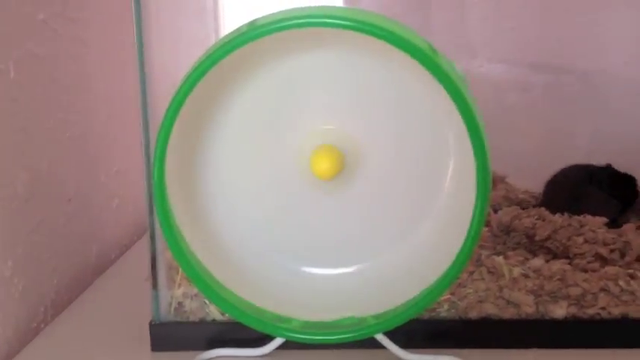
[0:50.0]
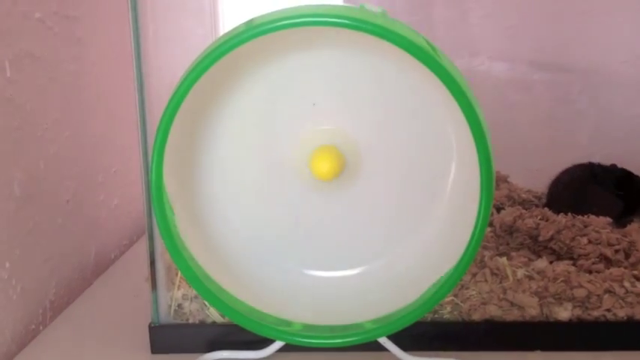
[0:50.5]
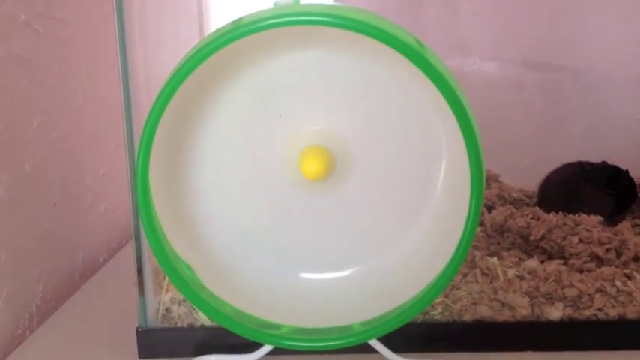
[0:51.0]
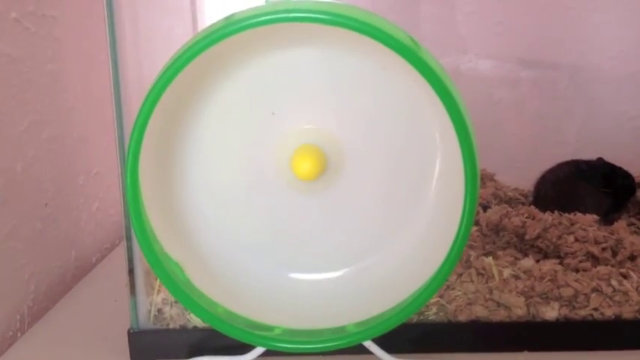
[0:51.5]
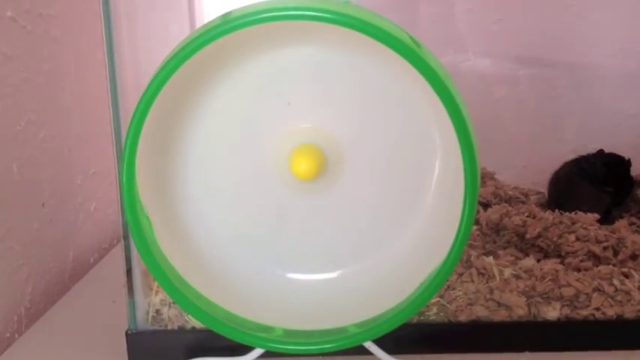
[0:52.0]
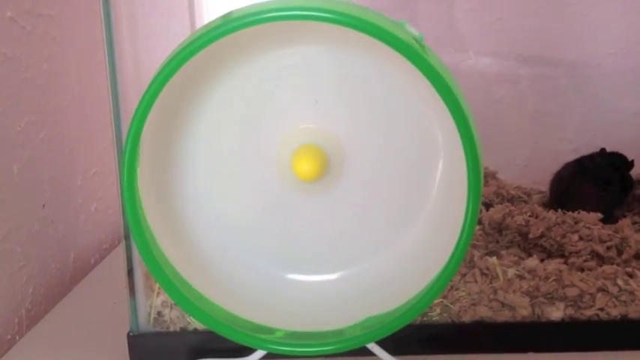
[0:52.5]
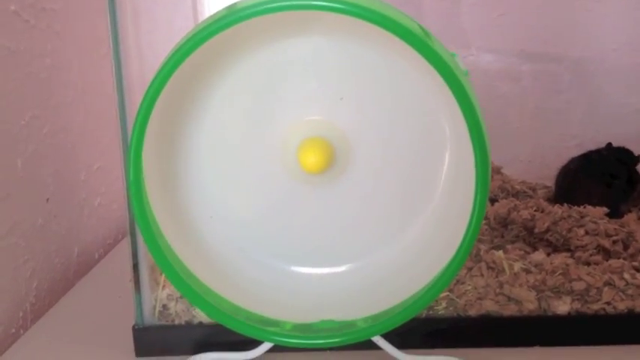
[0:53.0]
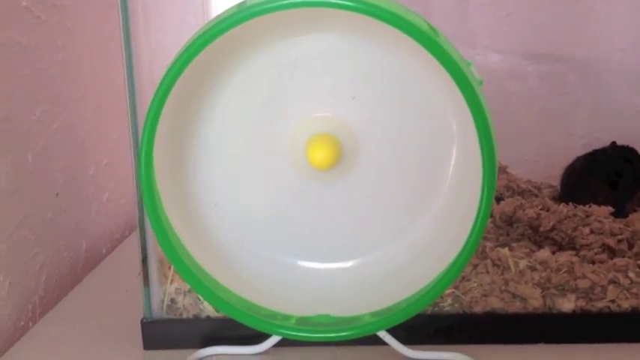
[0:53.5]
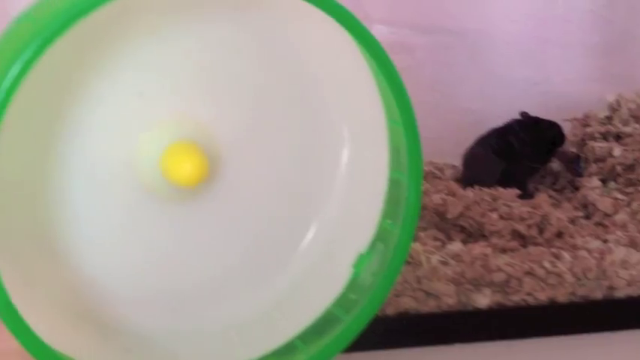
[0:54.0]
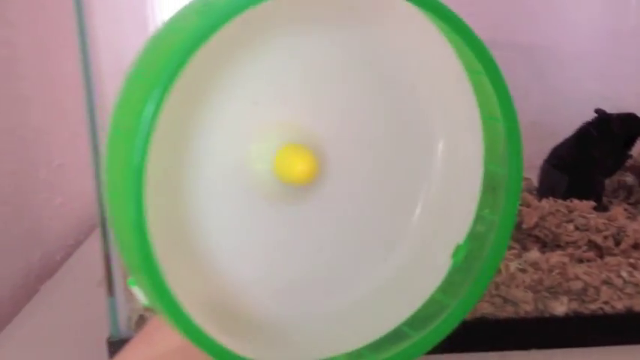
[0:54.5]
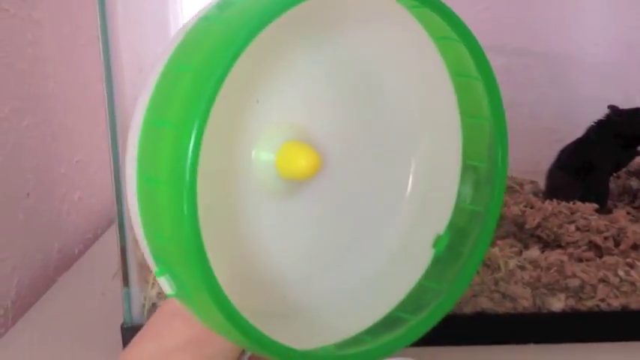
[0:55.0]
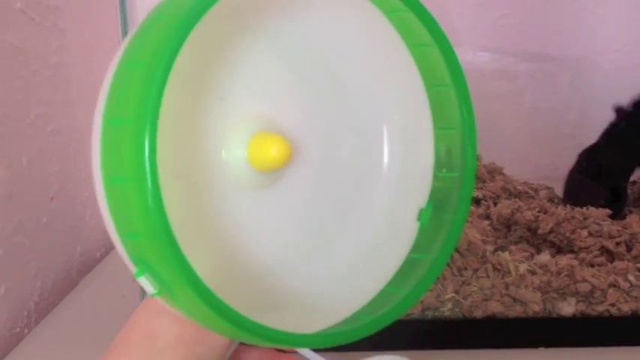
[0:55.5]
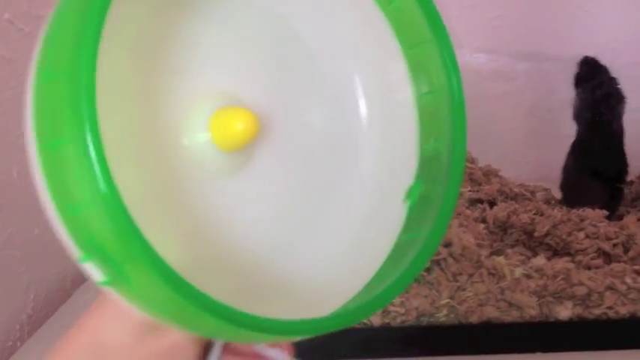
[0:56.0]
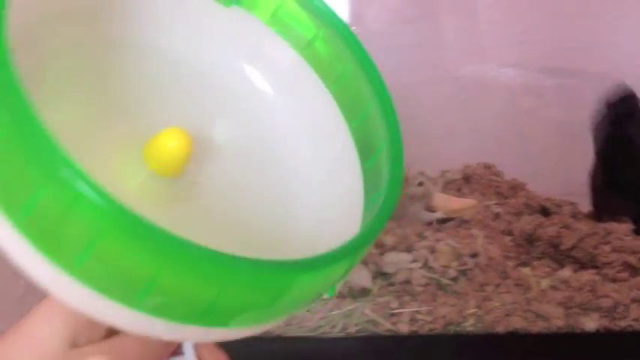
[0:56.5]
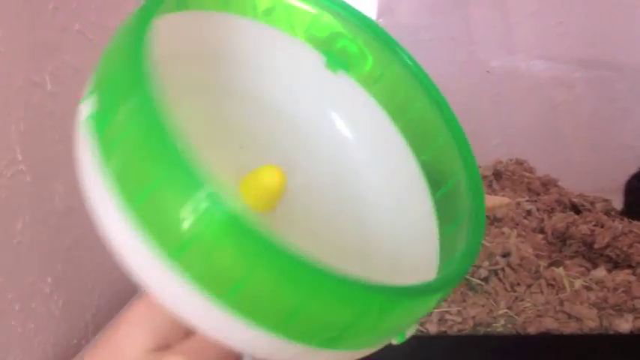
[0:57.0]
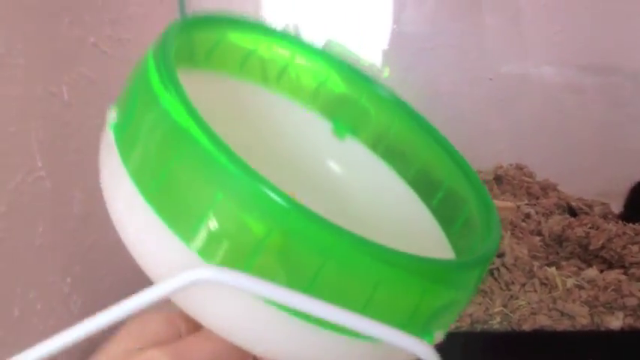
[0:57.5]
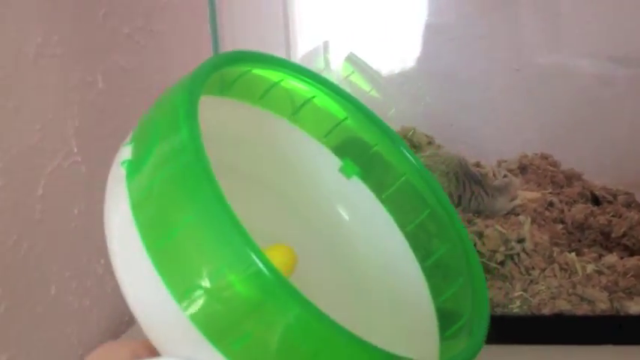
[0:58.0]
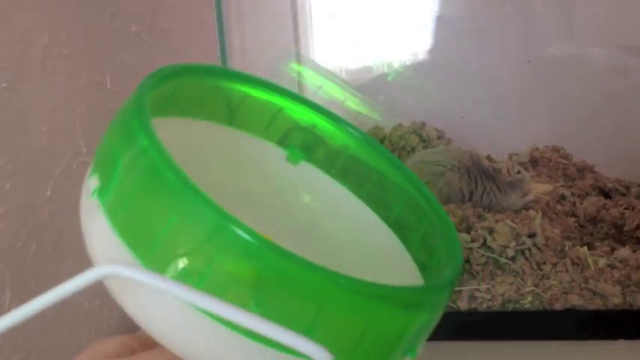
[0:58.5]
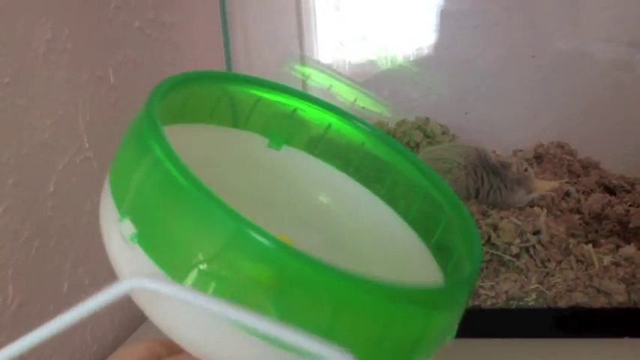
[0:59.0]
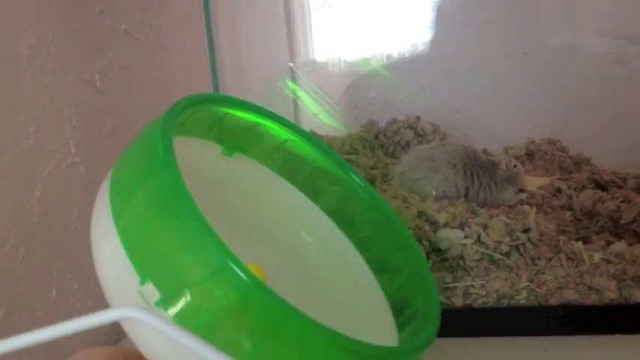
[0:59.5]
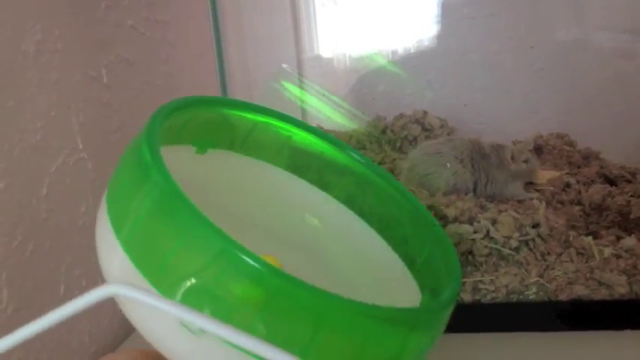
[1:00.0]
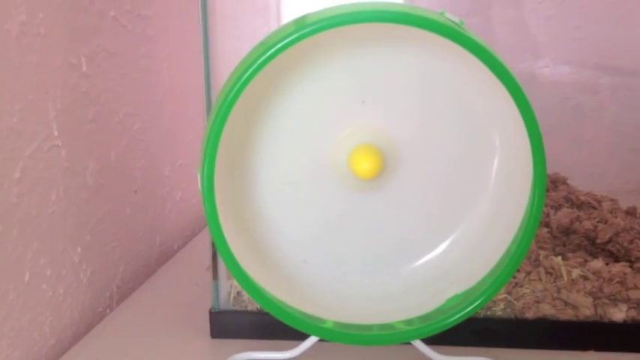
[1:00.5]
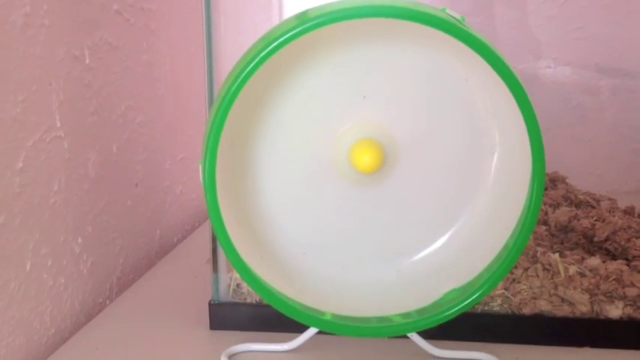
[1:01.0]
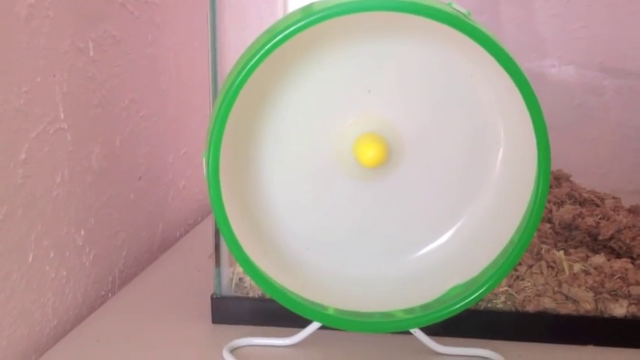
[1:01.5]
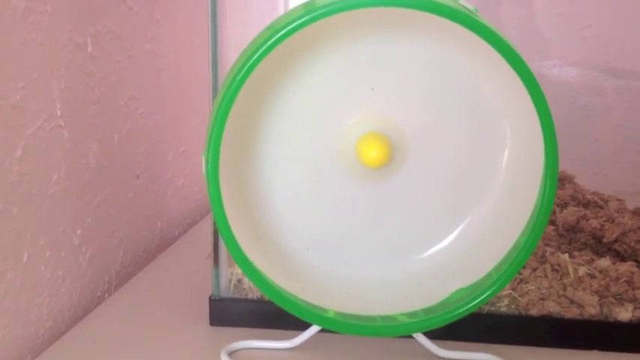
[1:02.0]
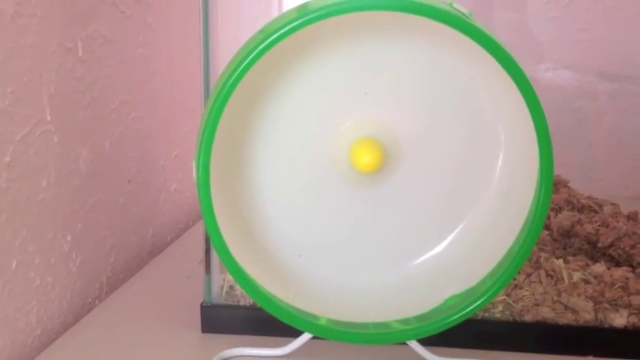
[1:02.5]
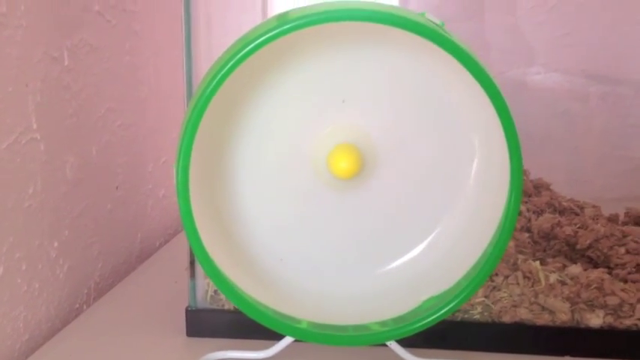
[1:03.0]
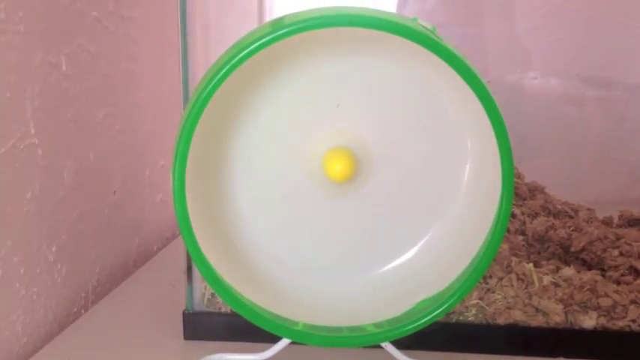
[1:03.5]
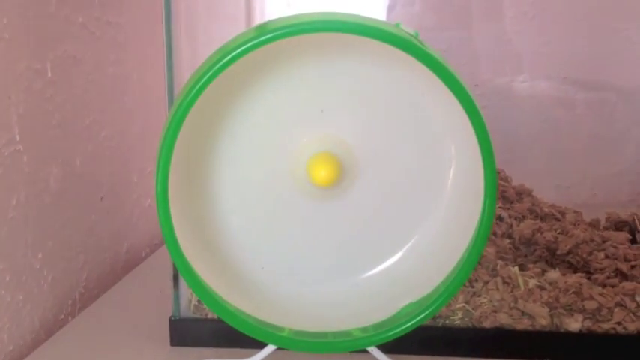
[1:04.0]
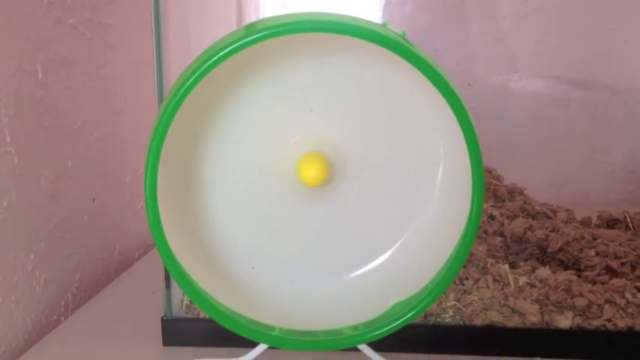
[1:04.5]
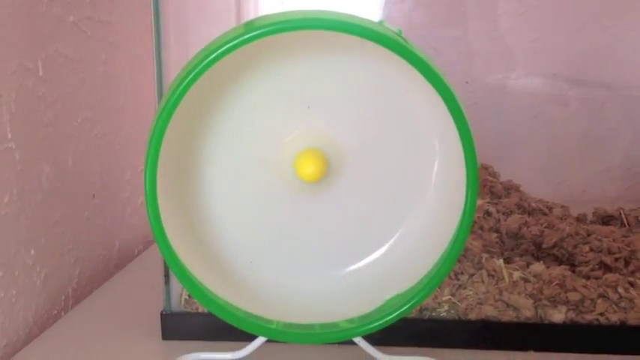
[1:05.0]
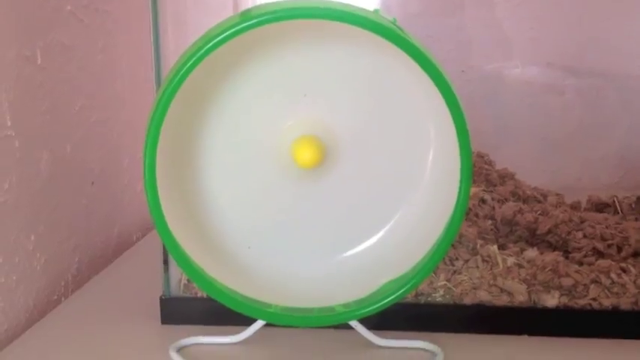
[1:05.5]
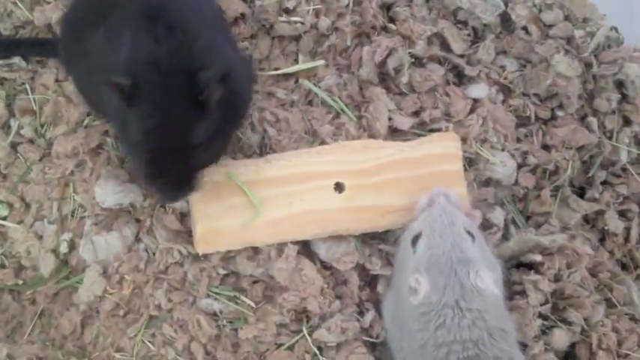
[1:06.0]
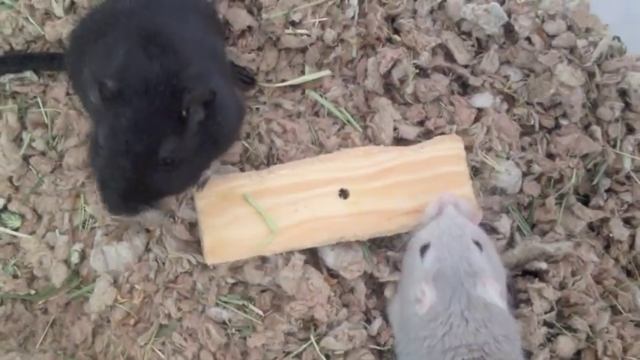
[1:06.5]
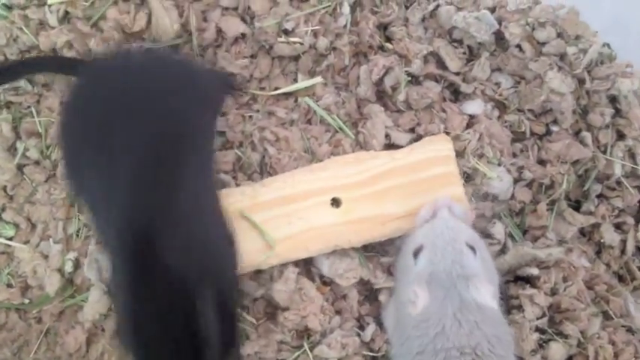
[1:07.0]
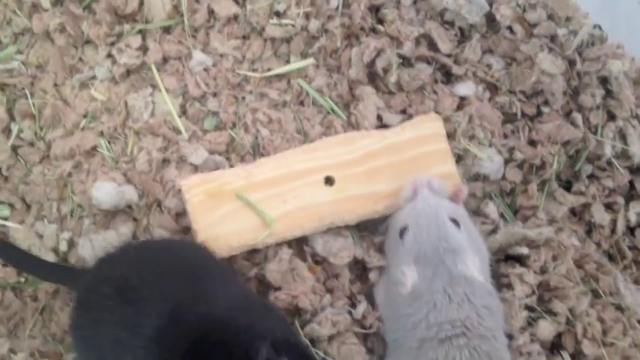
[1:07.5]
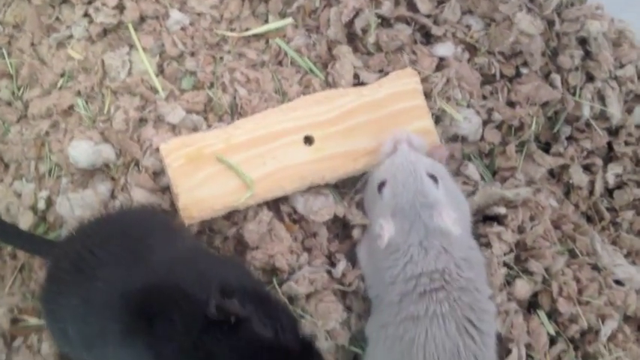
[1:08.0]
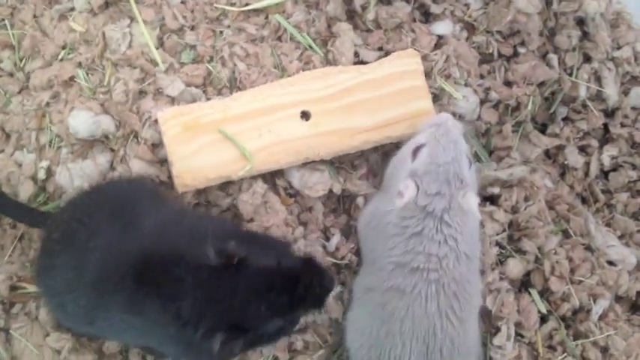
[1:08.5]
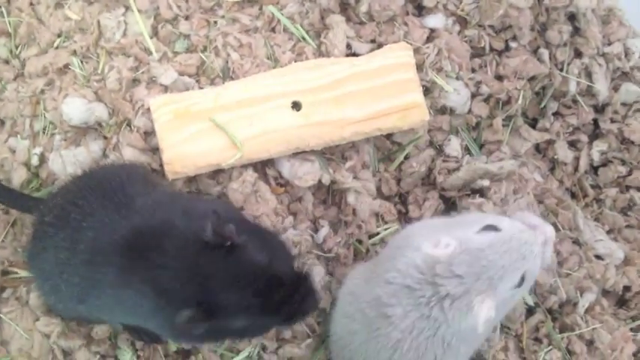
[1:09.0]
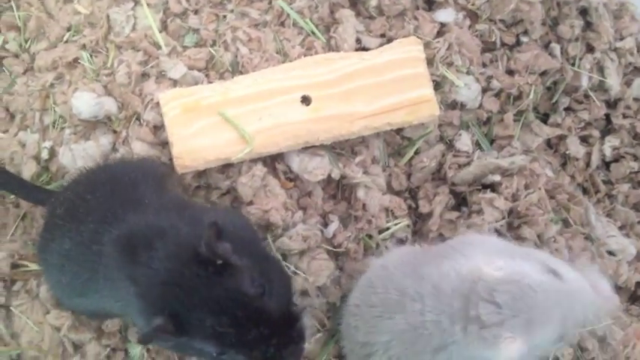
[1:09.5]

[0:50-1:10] The wheel is still spinning; it slows to a stop and moves slowly from side to side. A hand picks the wheel up and brings it close to the camera to show the side of the wheel. The wheel is then seen in front of the enclosure again, spinning extremely fast. The next shot shows the gerbils inside the enclosure, with the camera over the top looking down. The black gerbil is at the top left of the screen and the grey-white gerbil is at the bottom right. They are at opposite sides of a piece of wood that has a circle in the middle, both chewing on it. The black gerbil jumps to the bottom of the screen and behind the grey gerbil. The grey gerbil turns its attention to the right of the screen, then turns and runs over the wood towards the top left of the screen.